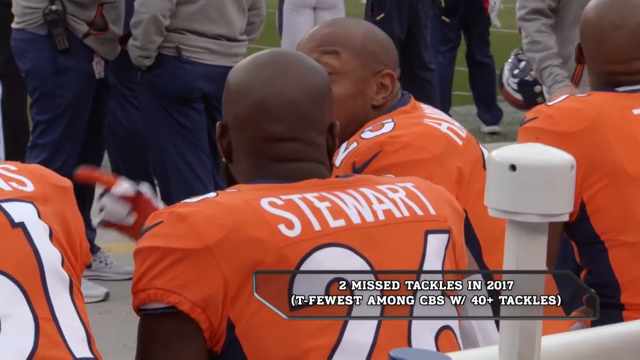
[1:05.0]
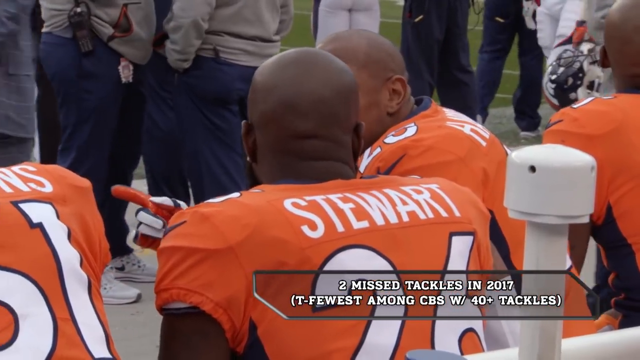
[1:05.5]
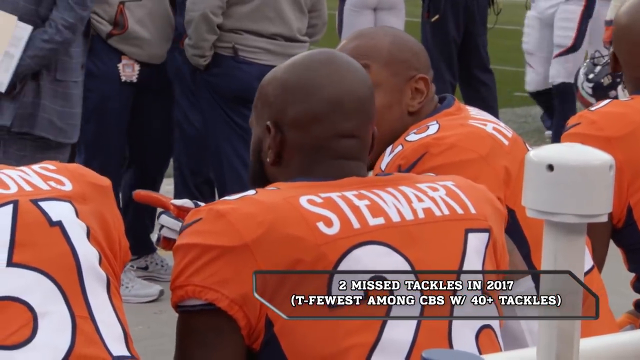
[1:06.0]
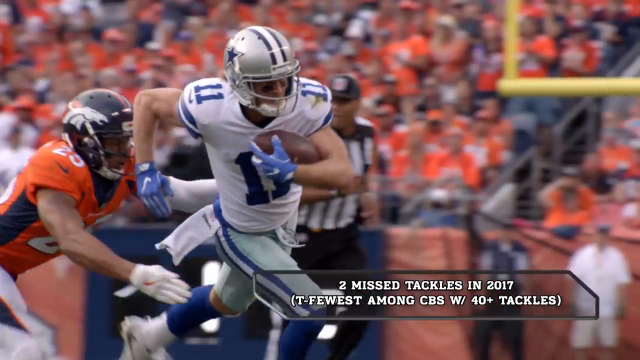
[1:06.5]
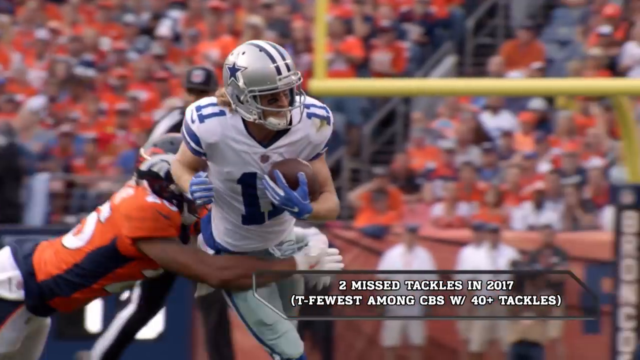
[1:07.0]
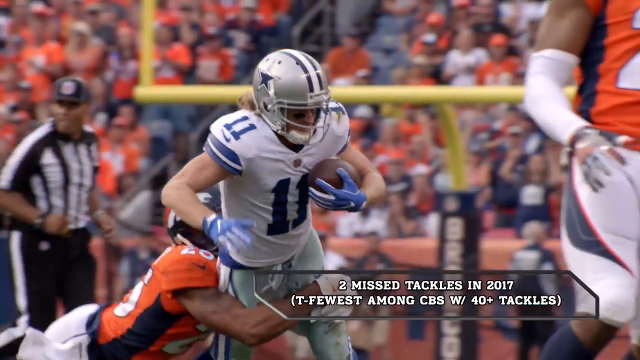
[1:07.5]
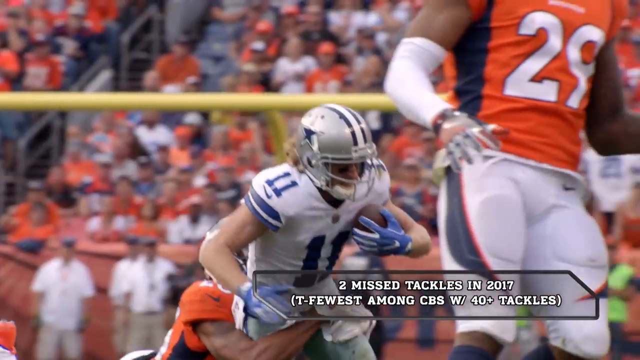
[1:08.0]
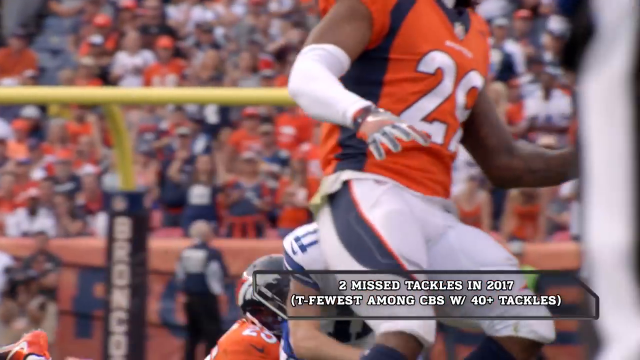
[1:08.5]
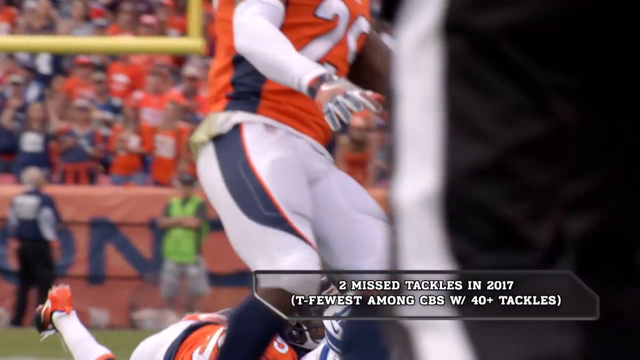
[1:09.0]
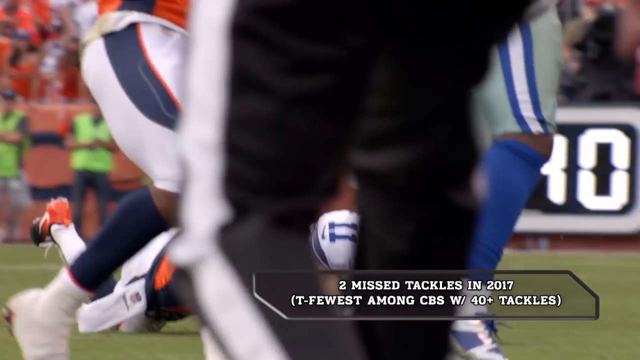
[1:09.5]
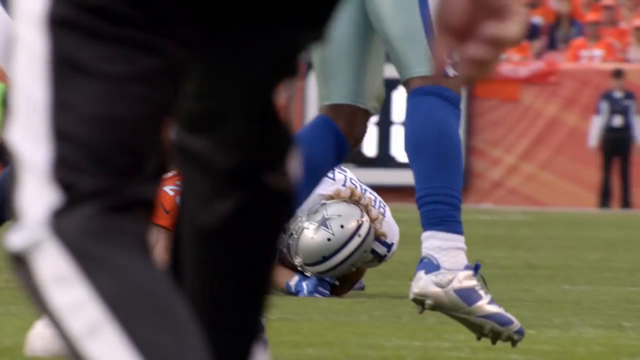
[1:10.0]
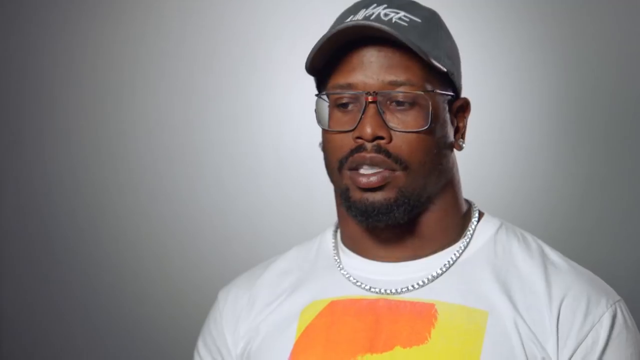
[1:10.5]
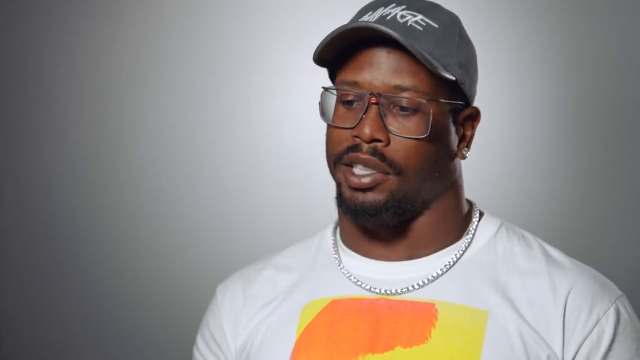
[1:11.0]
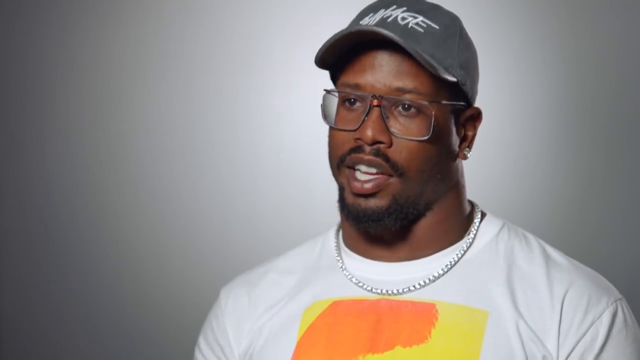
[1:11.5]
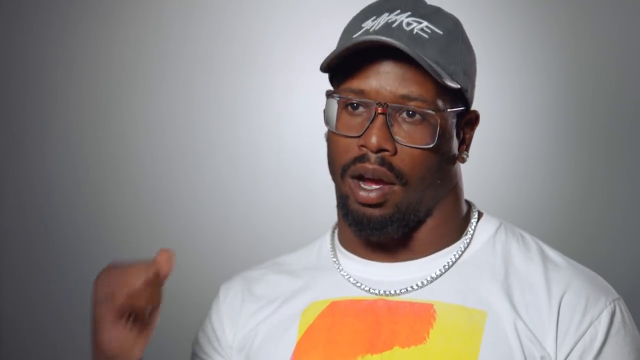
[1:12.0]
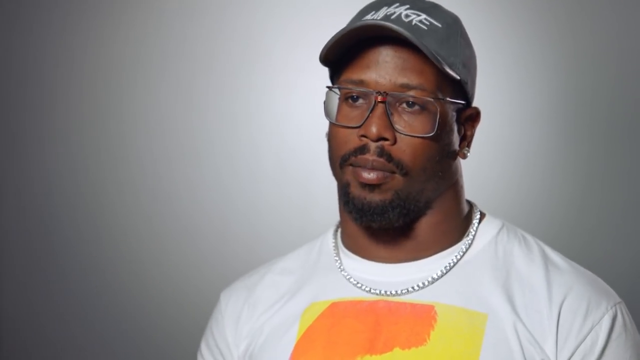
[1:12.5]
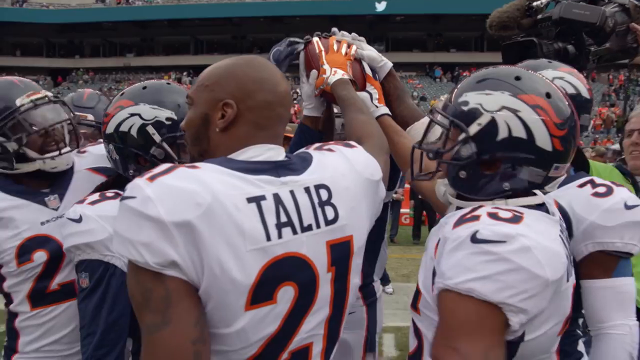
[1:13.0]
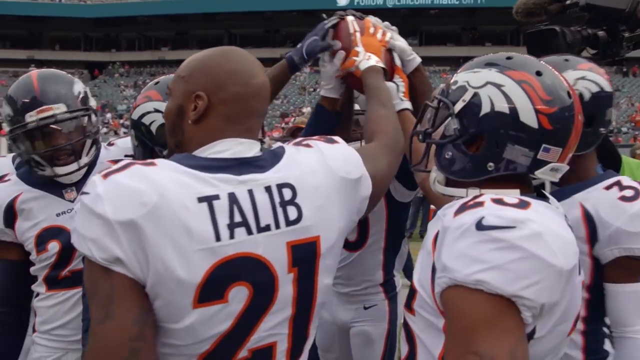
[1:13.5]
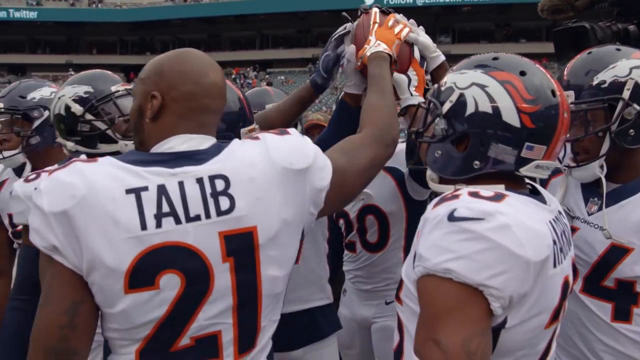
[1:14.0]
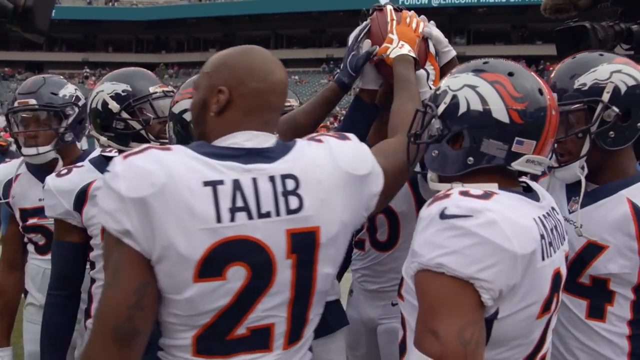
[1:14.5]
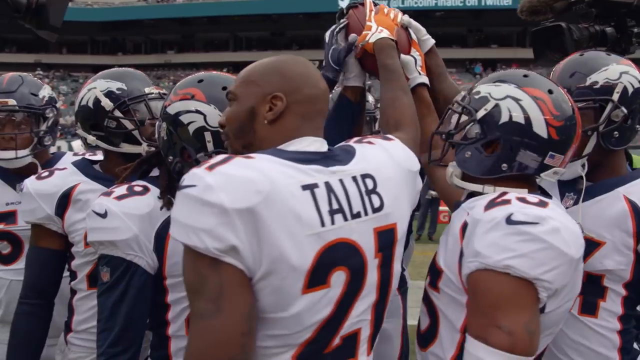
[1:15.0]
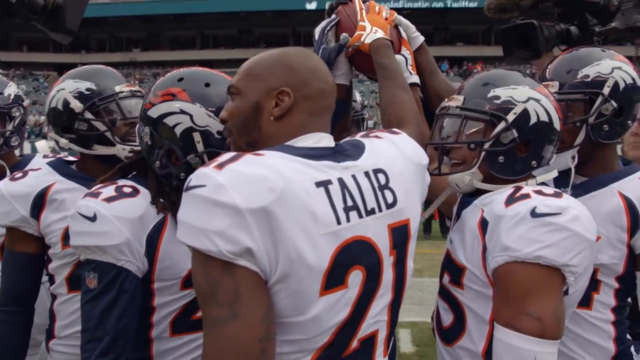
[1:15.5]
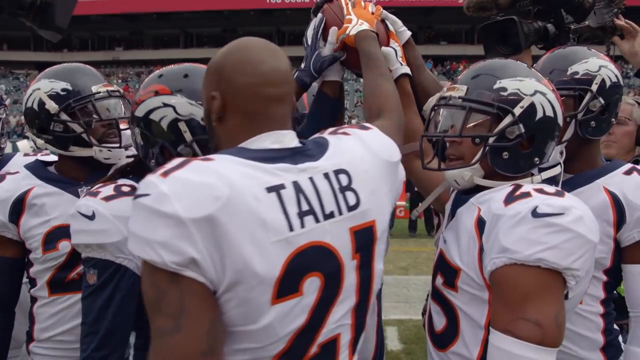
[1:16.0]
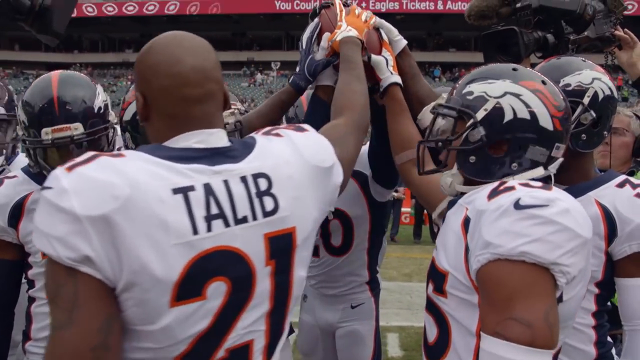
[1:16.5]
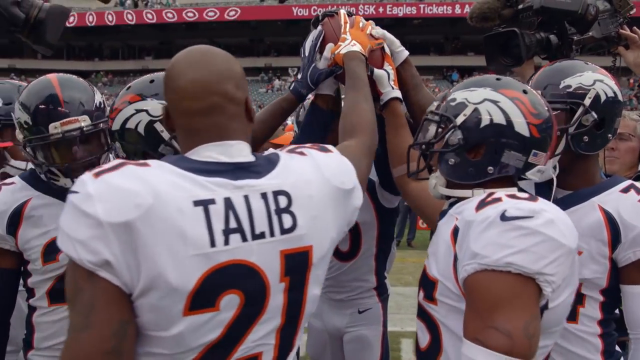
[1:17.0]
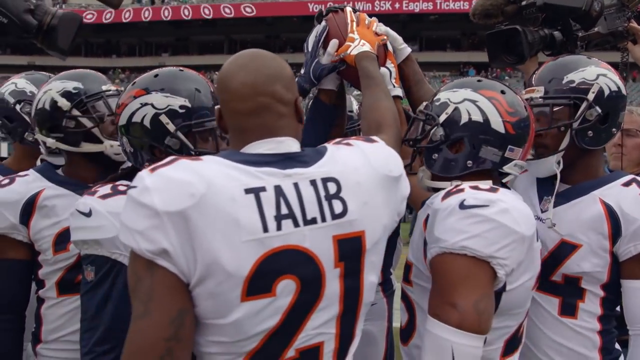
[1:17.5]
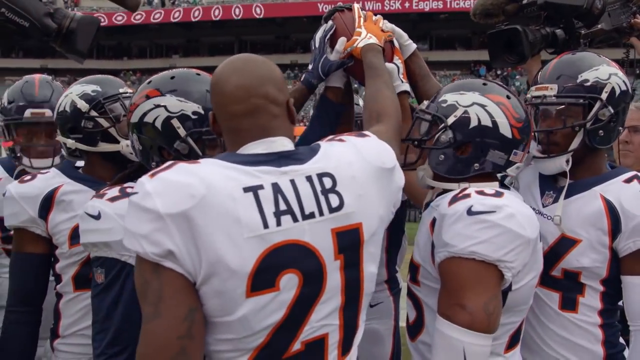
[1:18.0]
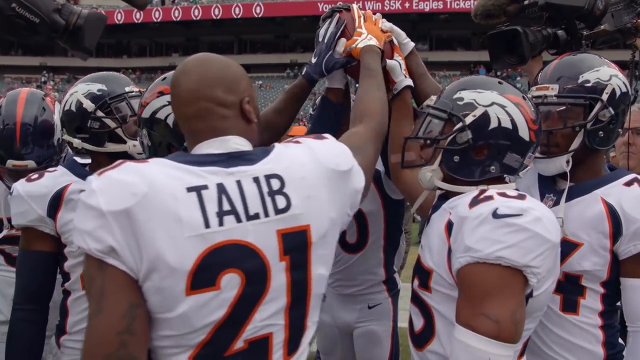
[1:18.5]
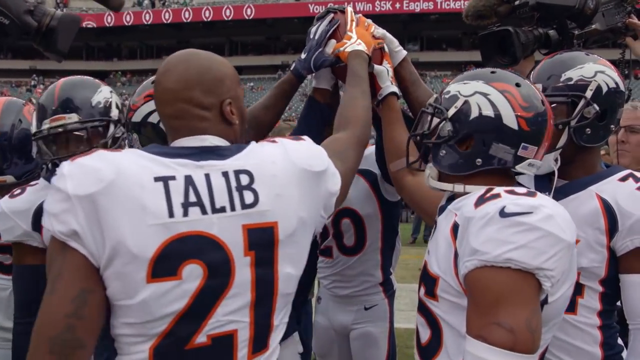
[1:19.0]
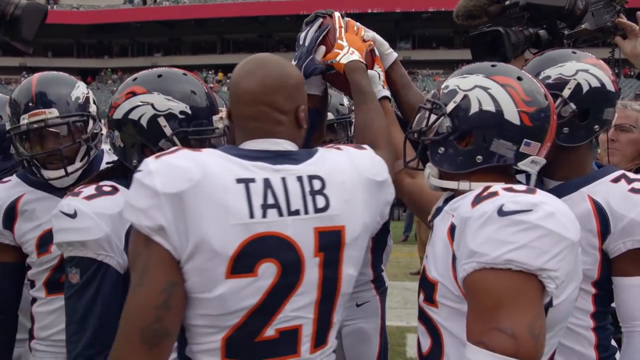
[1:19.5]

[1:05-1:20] Harris Jr. sits on the bench talking to his teammates. The video cuts to a very slow-motion shot of him tackling a Dallas Cowboys receiver, a white man with long blonde hair, to the ground. It cuts back to Von Miller talking to the camera, then to a team huddle in which players each have one arm raised, all with their hands on a football raised in the center. On the backs of the jerseys, one with number 21 and one reading "Harris 25" can be made out.